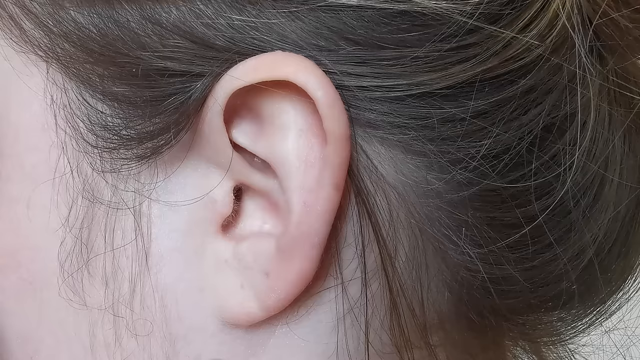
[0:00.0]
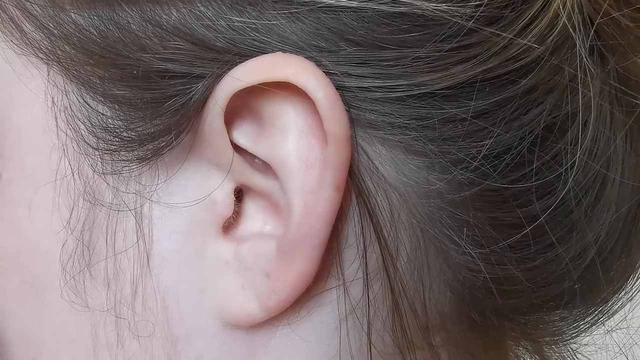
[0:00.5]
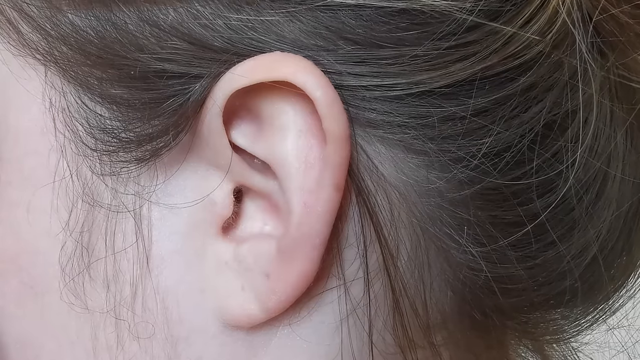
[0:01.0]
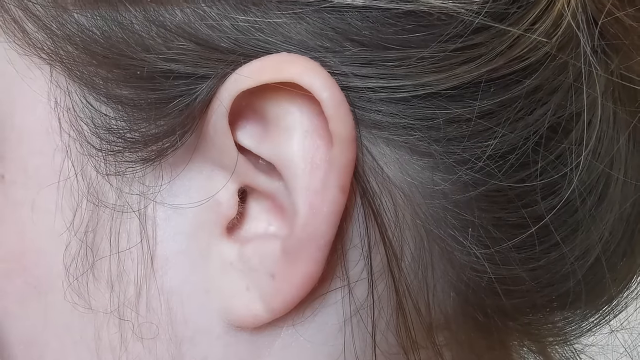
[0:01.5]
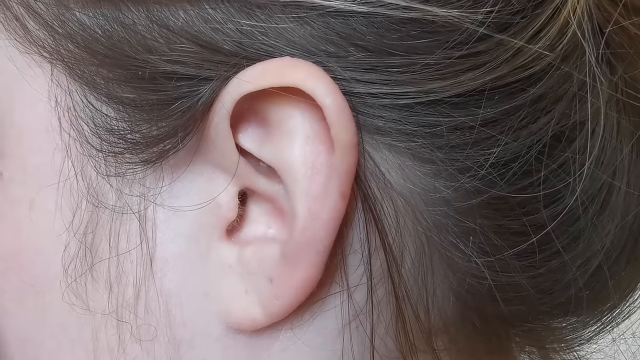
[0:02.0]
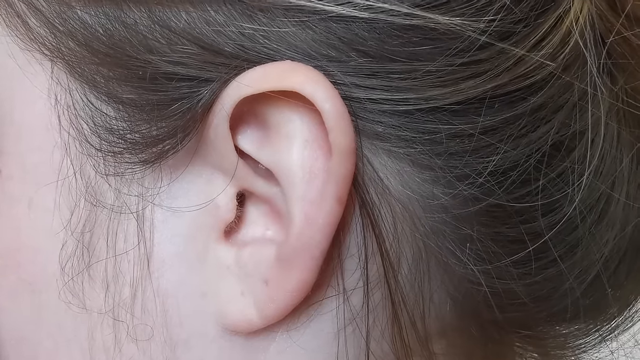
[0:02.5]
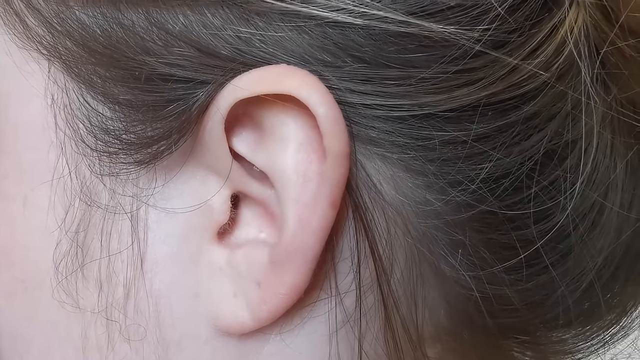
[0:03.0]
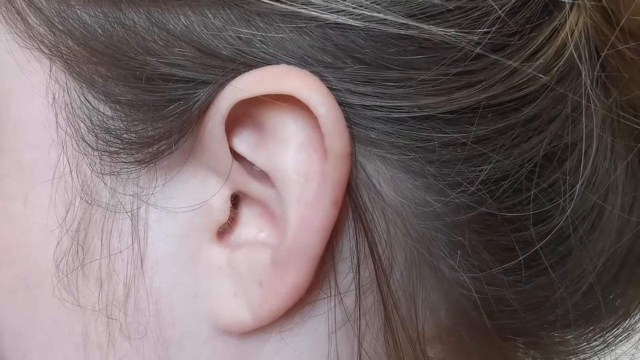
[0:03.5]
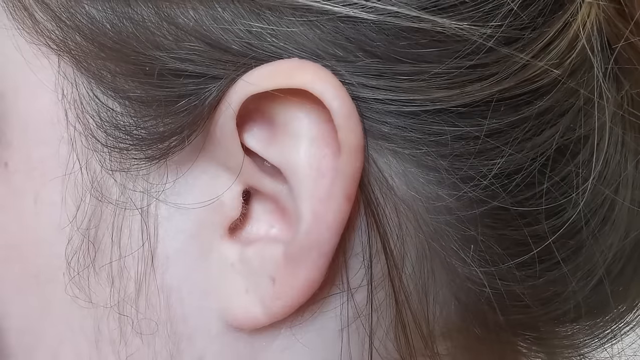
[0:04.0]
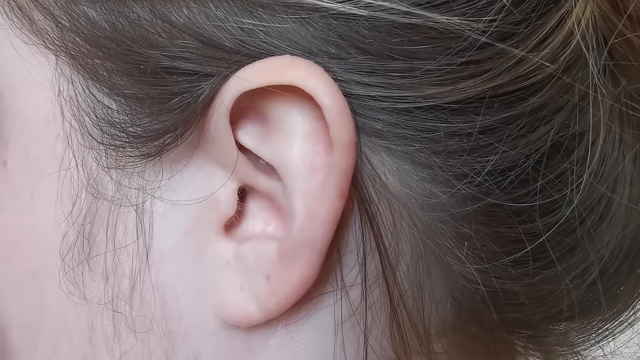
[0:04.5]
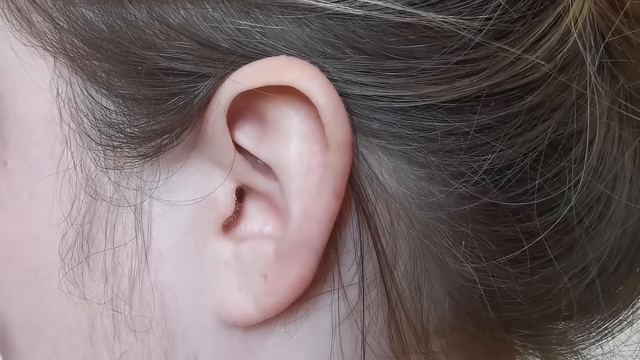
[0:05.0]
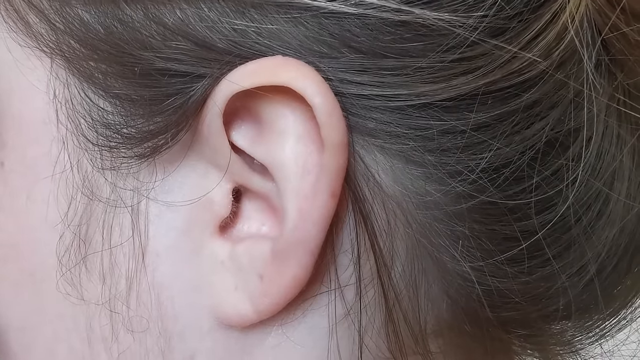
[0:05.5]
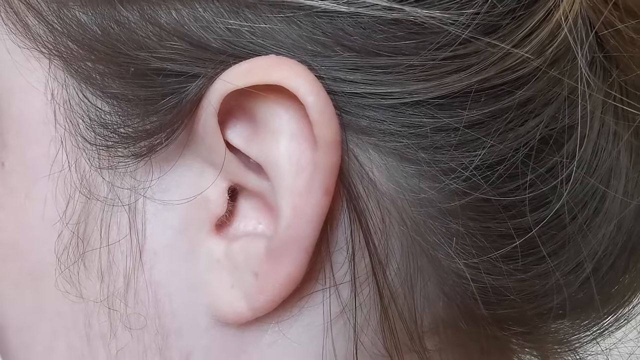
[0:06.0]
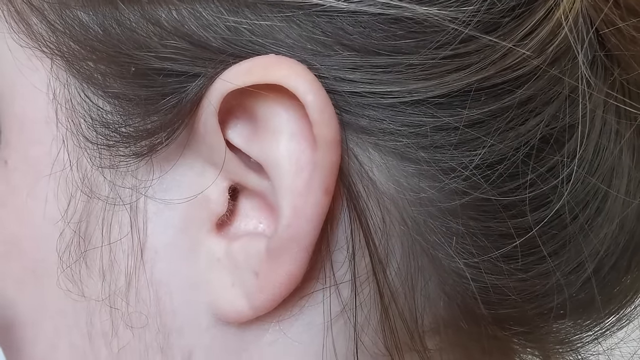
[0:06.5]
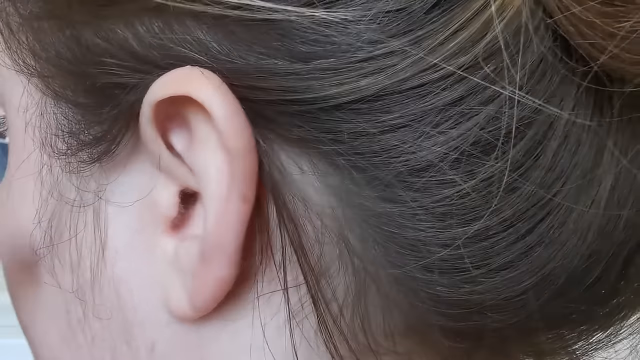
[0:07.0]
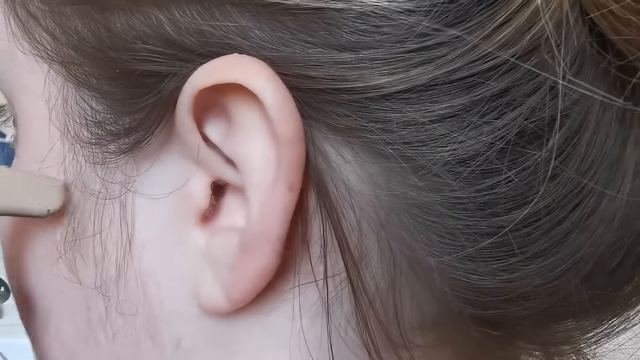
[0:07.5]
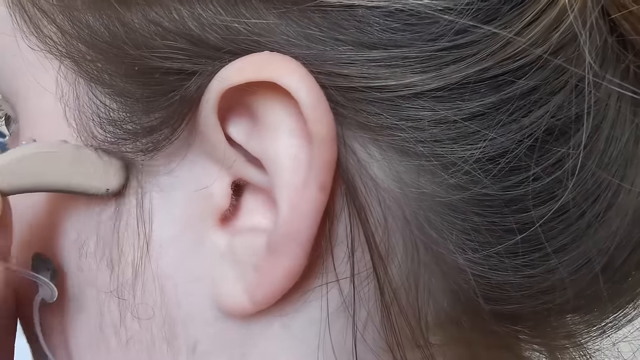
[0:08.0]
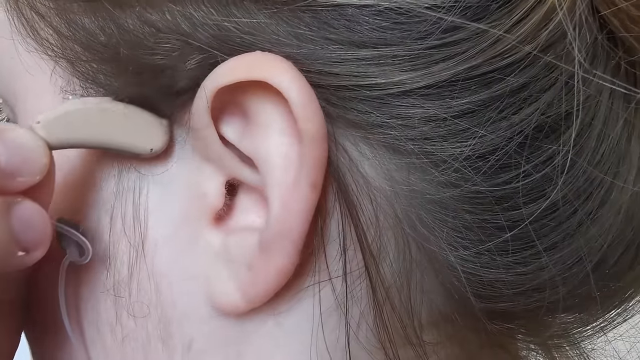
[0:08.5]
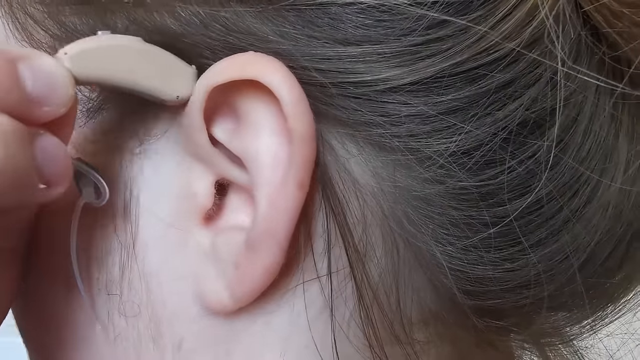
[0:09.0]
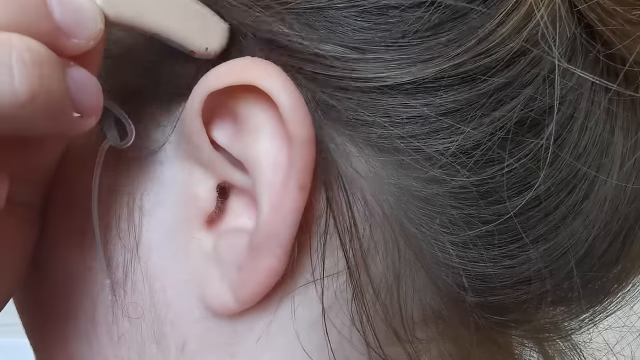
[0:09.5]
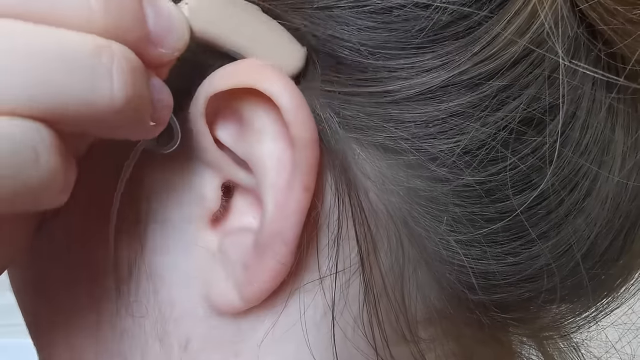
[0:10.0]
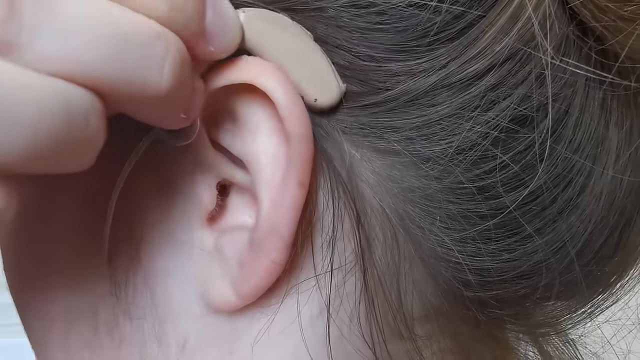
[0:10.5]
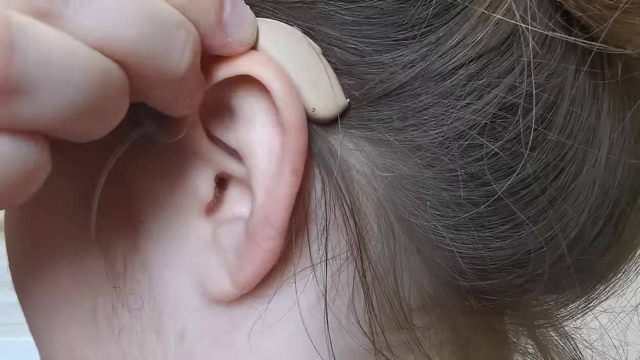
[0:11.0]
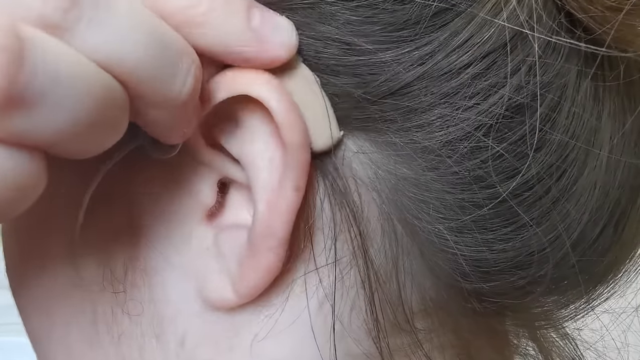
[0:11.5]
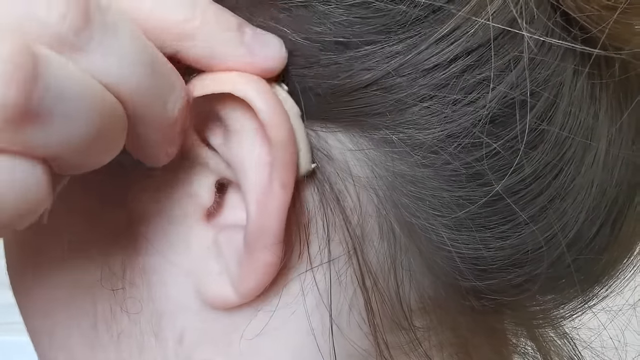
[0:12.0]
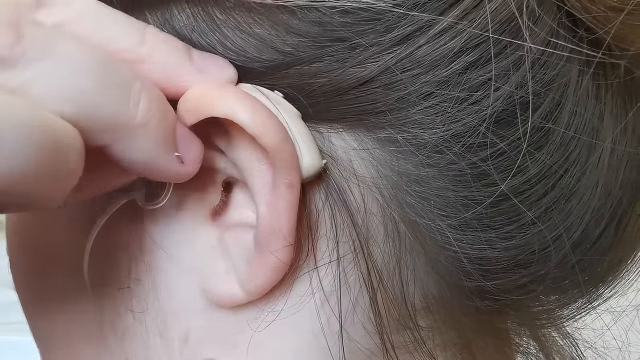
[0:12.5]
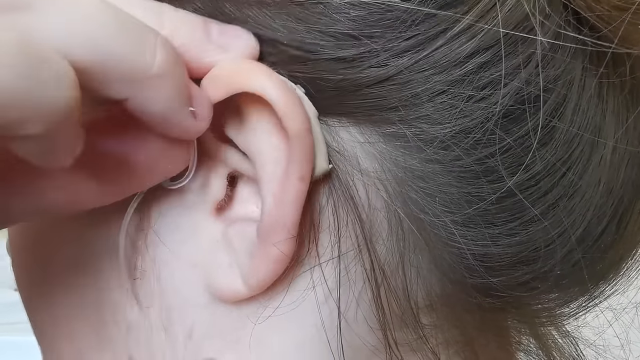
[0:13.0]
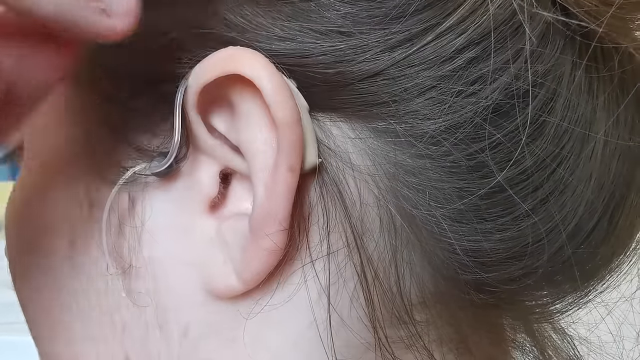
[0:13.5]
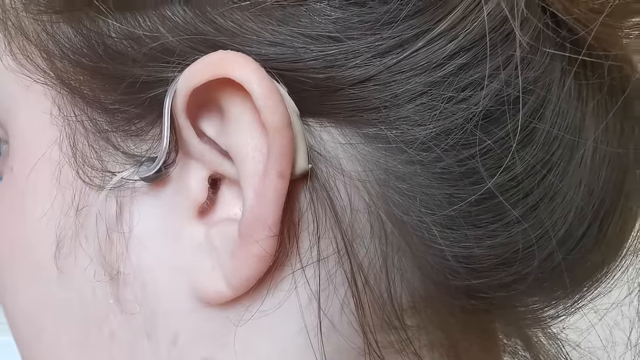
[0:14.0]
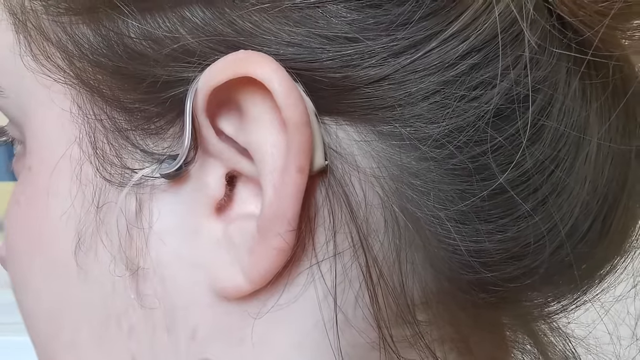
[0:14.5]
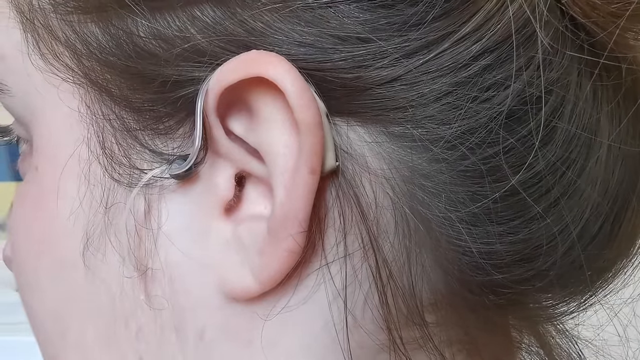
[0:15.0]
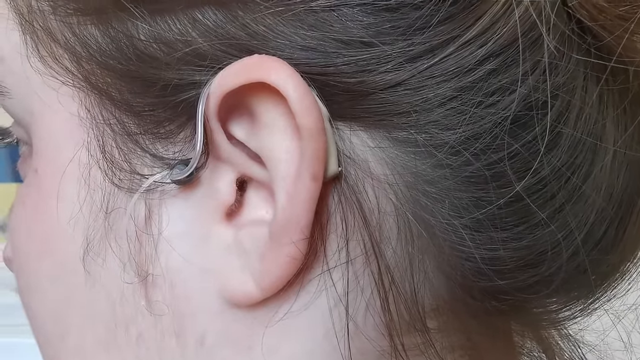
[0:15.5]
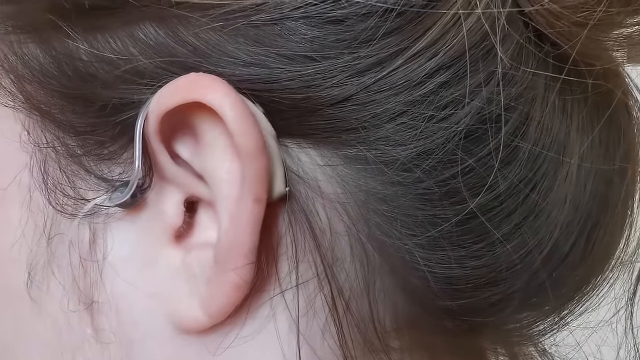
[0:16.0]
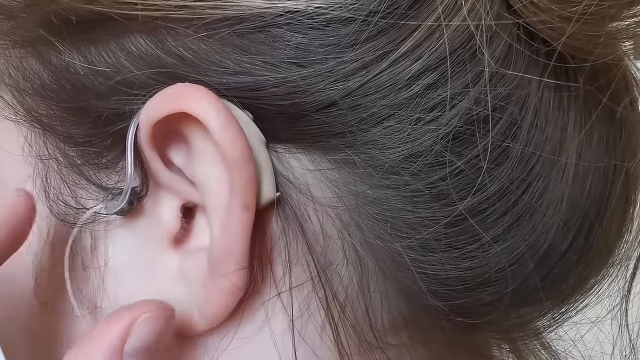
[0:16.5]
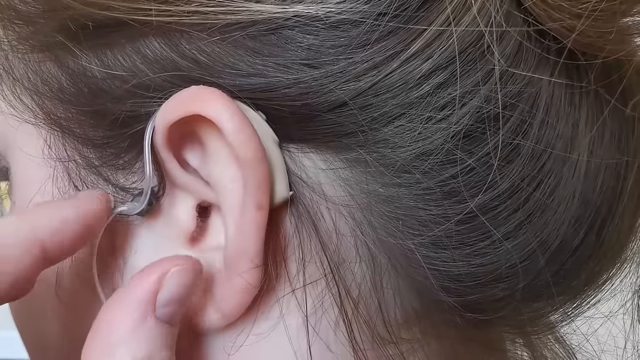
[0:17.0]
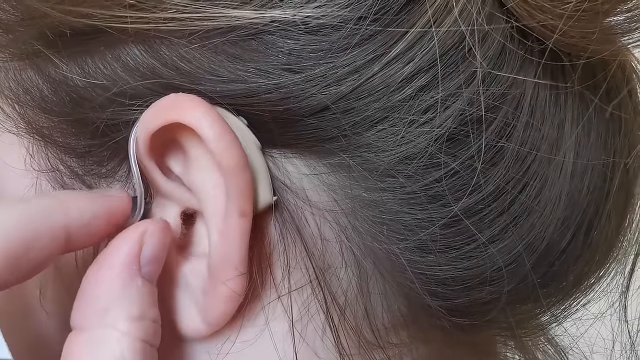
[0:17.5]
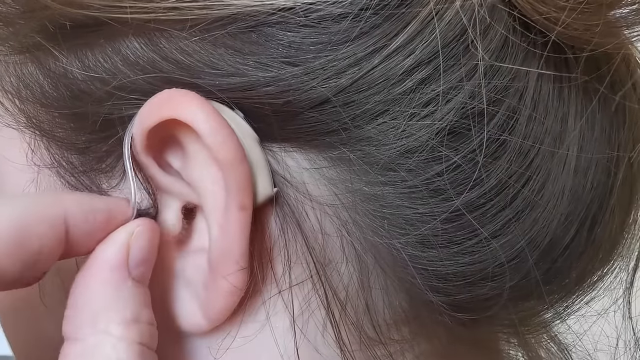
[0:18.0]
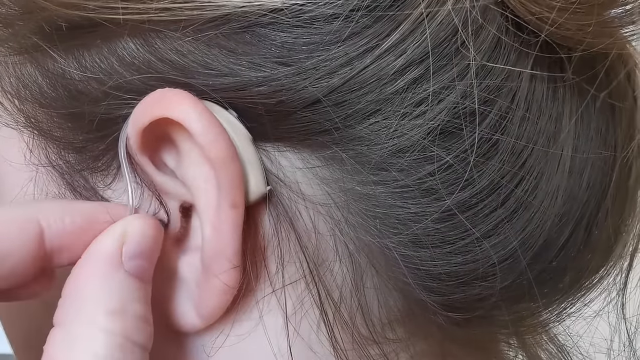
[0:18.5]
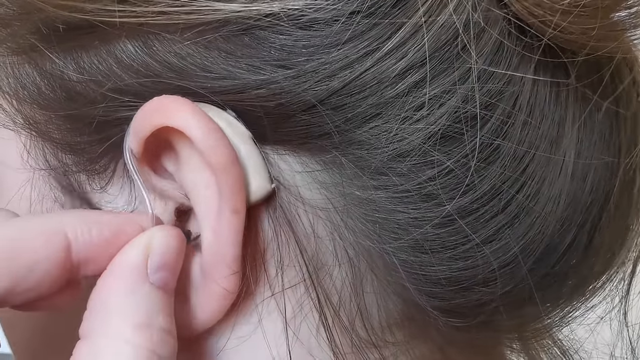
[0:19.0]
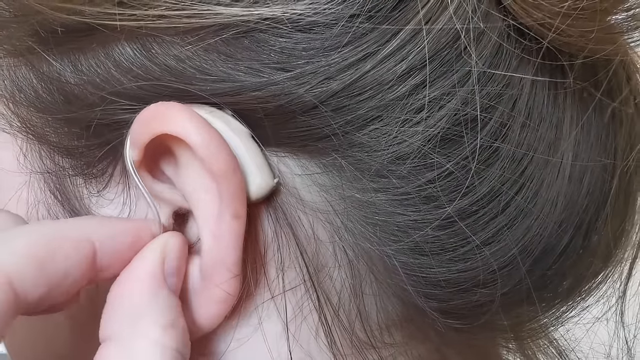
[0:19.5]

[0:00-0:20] A close-up shows a Caucasian person's left ear, with sandy brown hair pulled behind the ear. The person puts on a hearing aid, placing a thick piece of plastic behind the ear, with tubing running in front of the ear. The person then places a smaller piece of the hearing aid into the ear canal, doing so with ease and no trouble. The person has bigger nails clipped very short. By the end, the hearing aid is installed on the left ear. Only the part behind the ear shows; it looks like ivory-colored plastic, apparently meant to match Caucasian skin. The tubing is clear and see-through, and the piece inside the ear canal is barely visible.